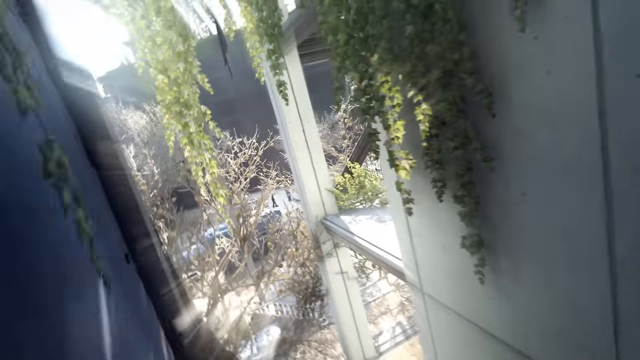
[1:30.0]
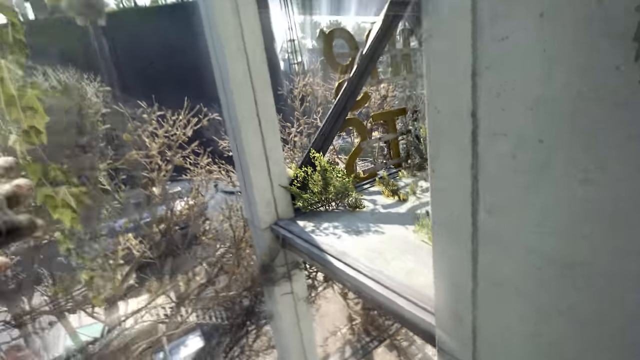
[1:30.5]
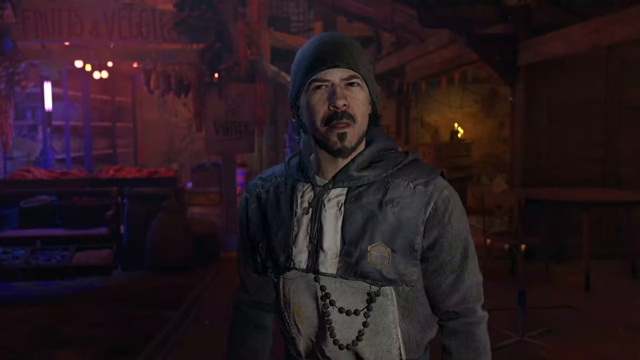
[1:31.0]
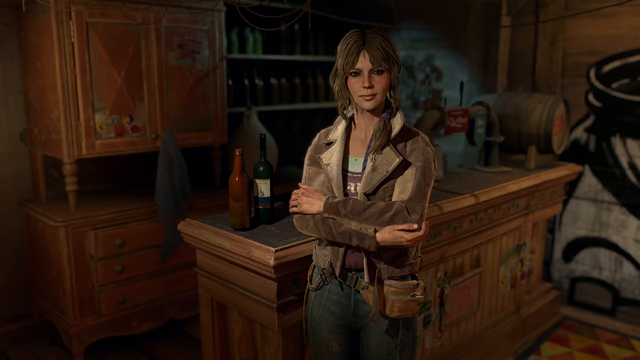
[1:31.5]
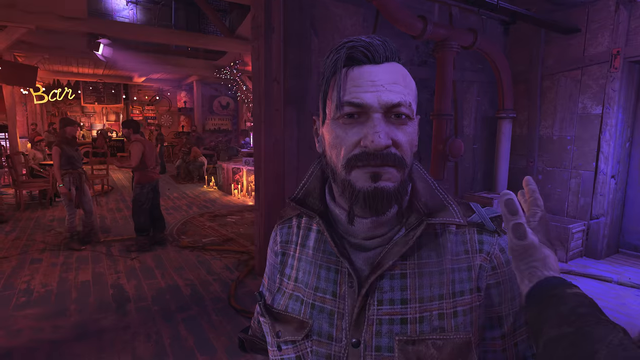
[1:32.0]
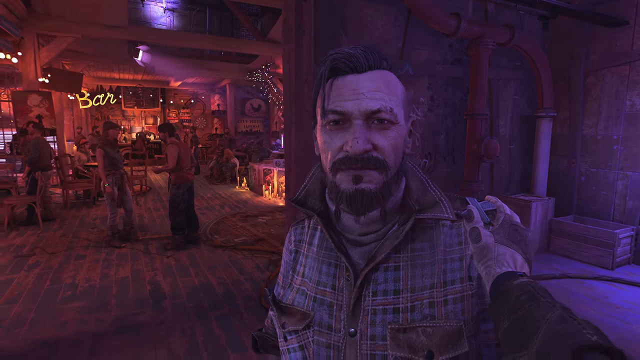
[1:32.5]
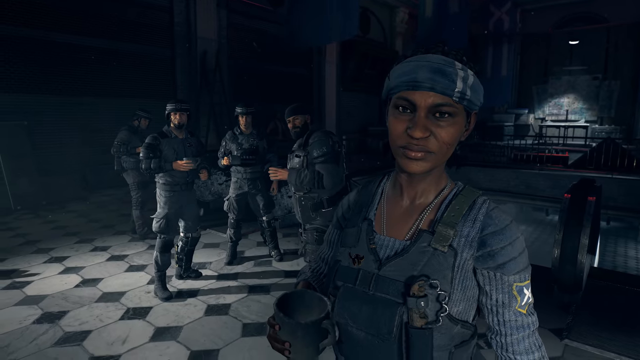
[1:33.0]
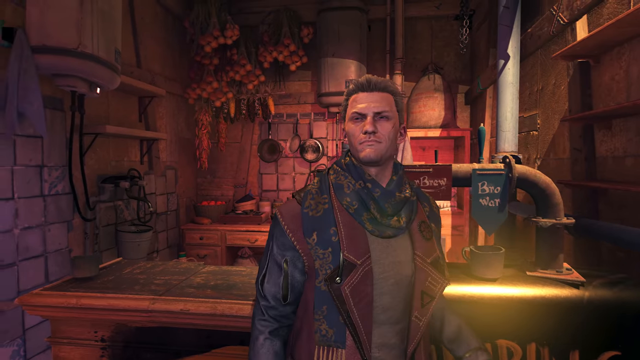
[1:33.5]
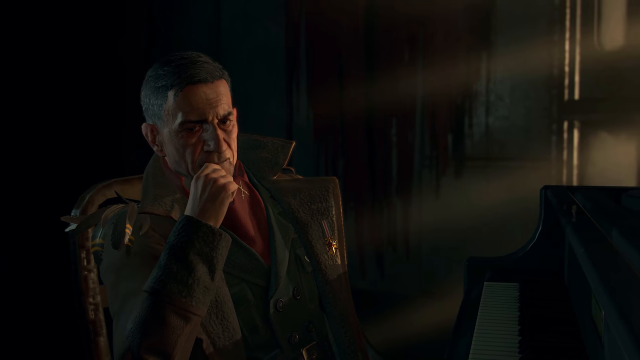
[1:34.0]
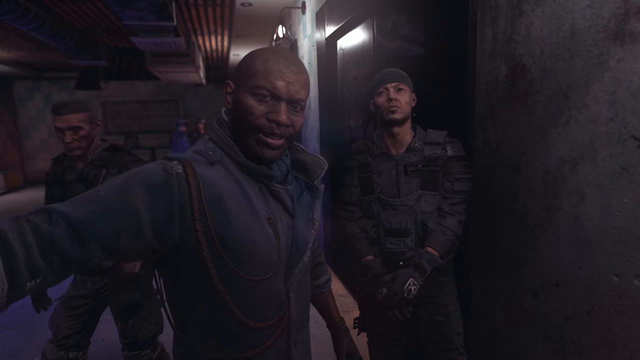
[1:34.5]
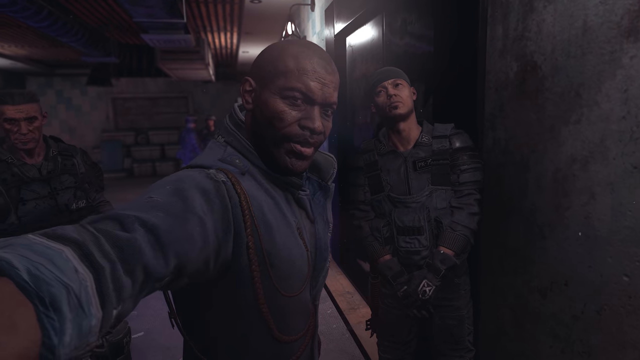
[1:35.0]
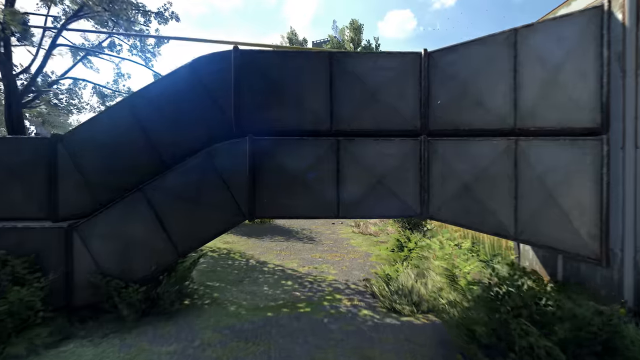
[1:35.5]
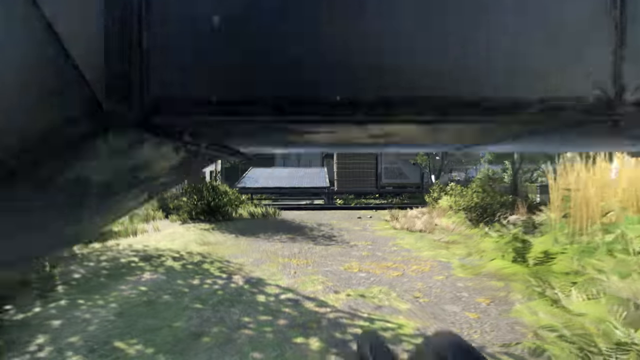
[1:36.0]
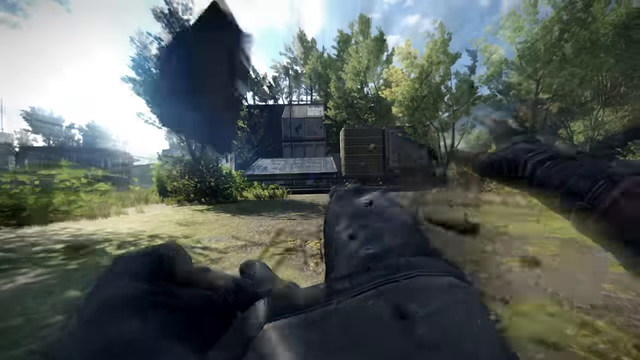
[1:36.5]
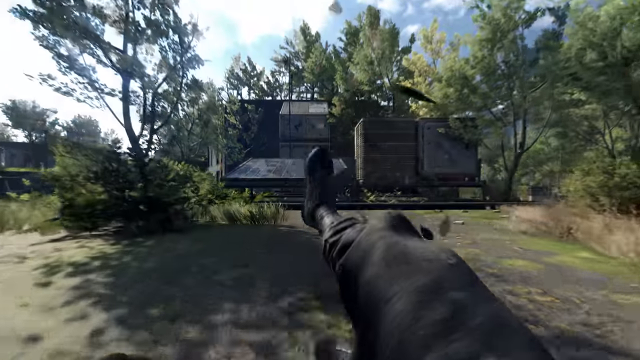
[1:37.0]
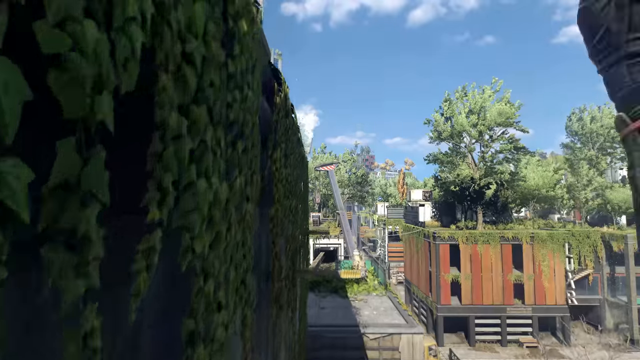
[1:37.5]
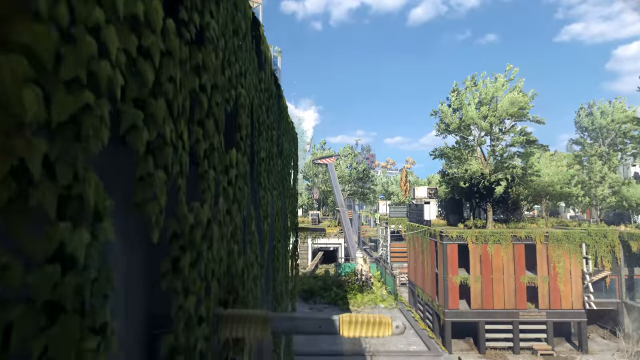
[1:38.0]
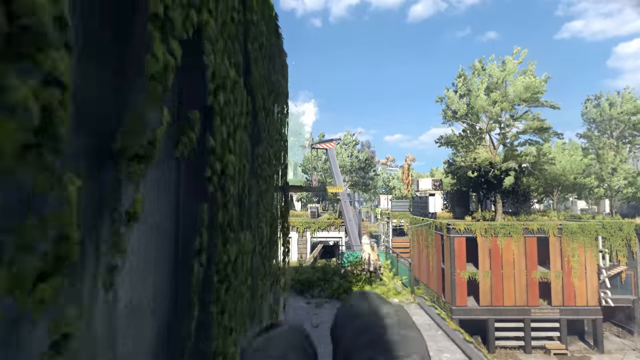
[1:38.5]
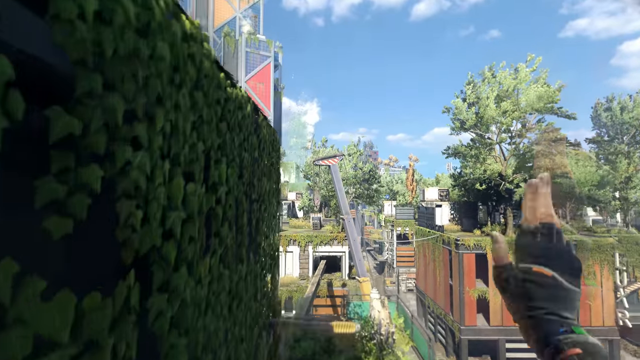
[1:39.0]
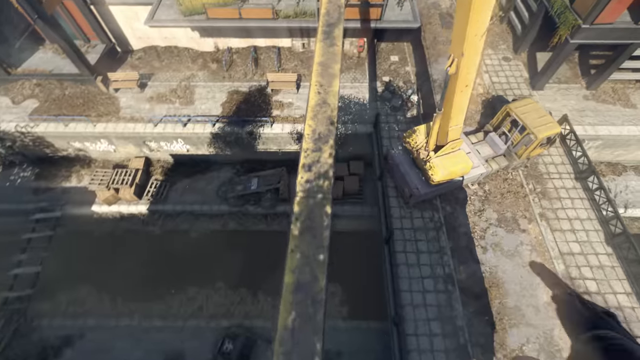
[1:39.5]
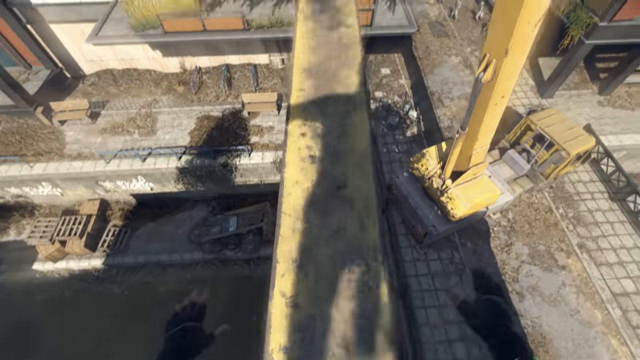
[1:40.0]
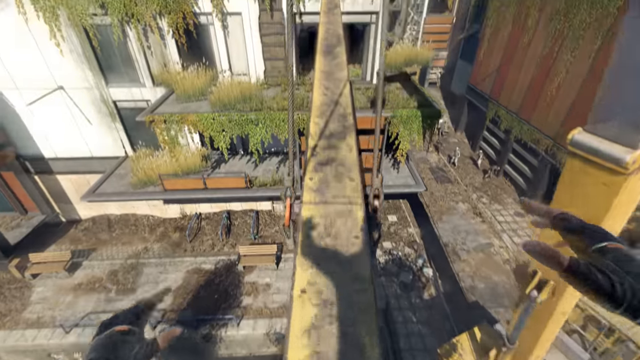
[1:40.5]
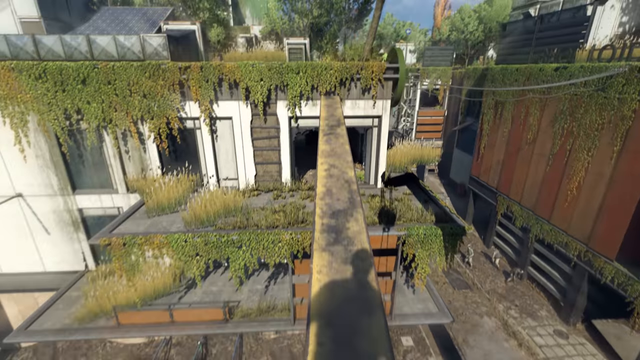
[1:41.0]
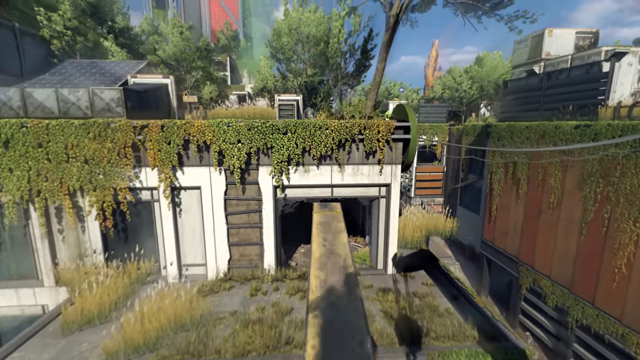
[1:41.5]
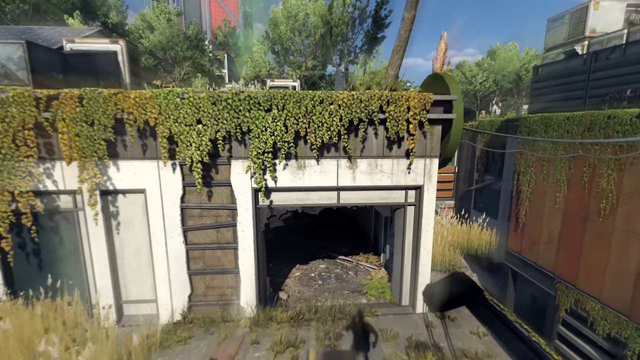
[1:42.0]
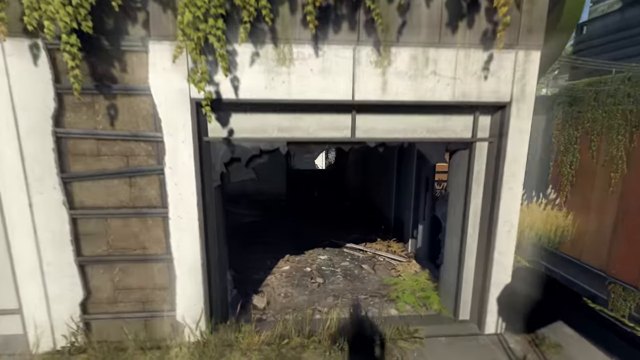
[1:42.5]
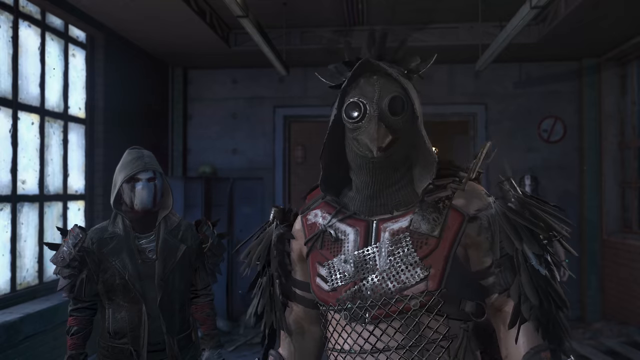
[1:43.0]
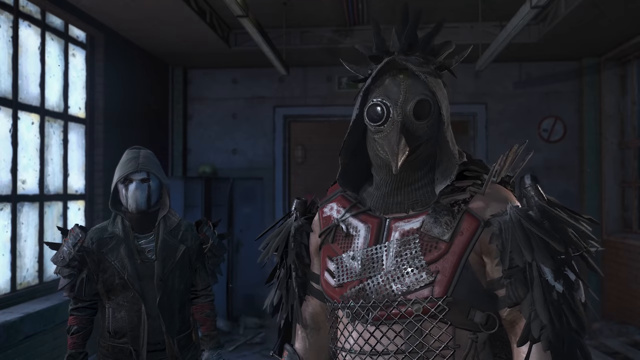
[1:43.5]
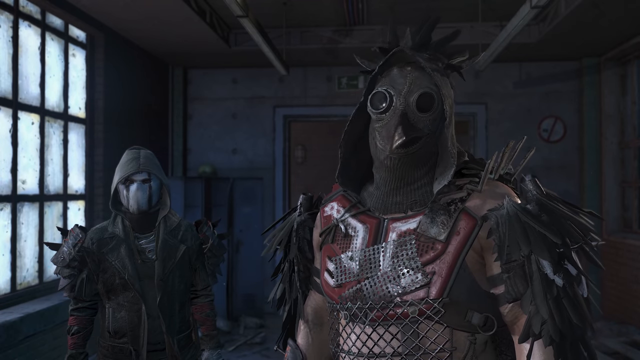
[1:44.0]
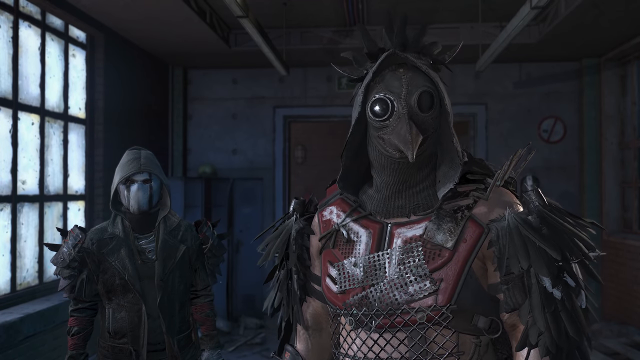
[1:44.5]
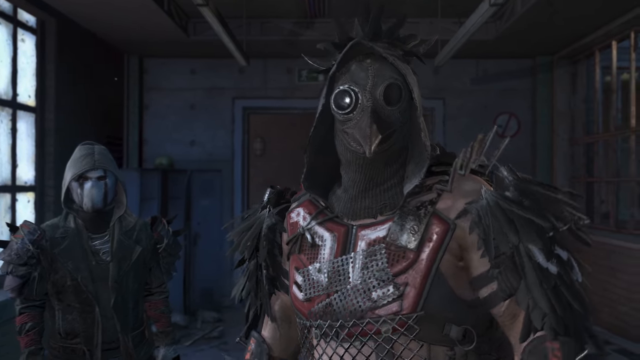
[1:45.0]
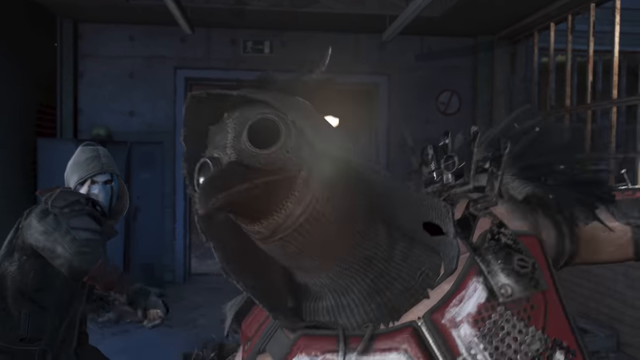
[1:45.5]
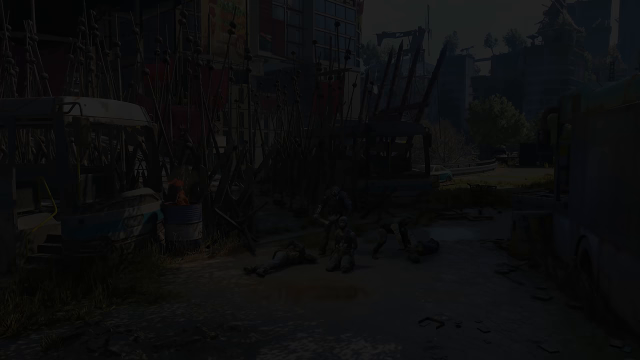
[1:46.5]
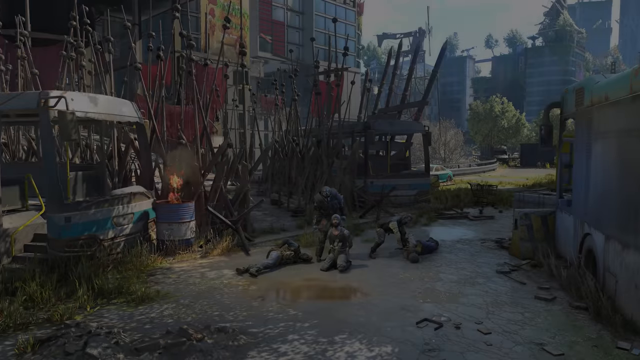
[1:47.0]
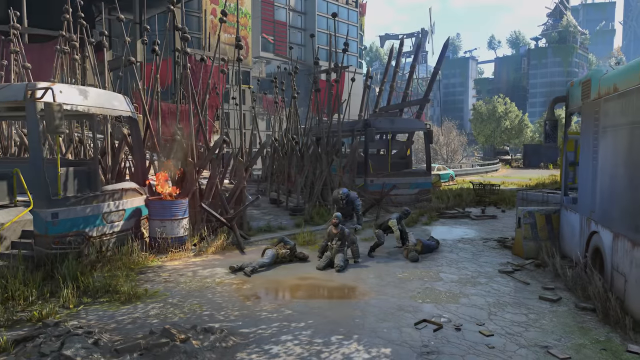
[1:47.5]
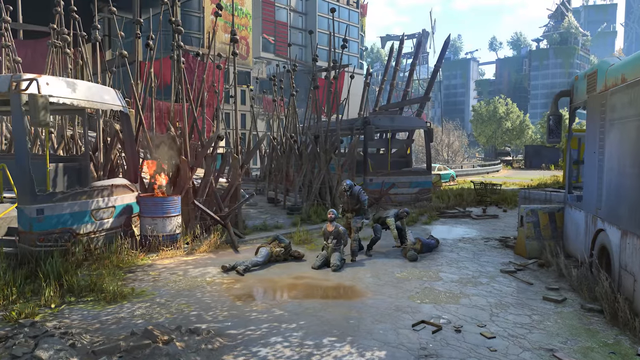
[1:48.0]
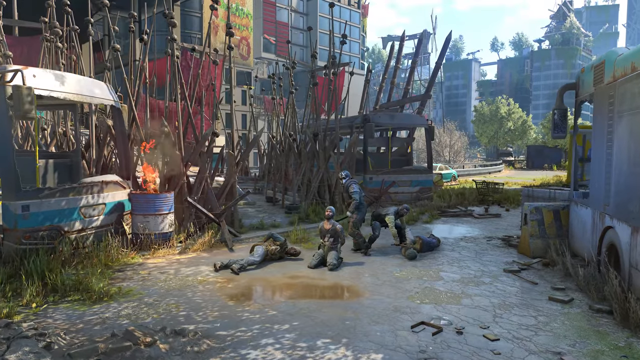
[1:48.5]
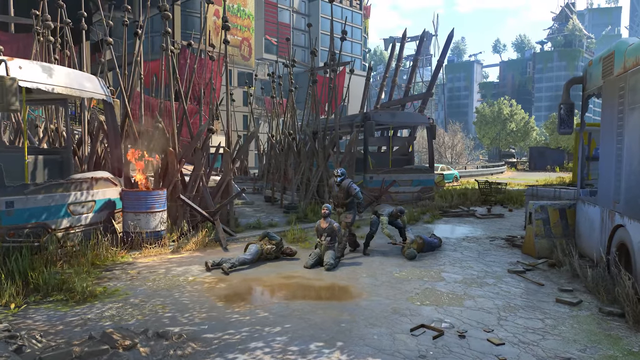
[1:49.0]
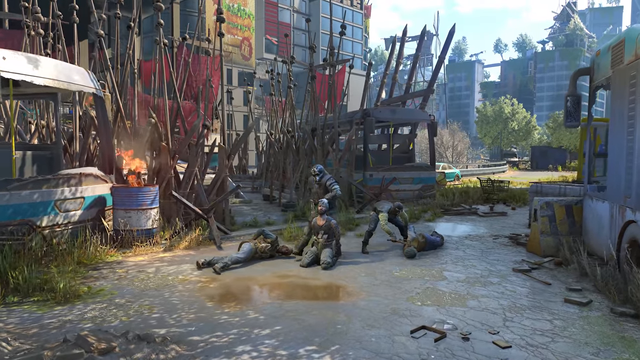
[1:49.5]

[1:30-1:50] The scene is outside among abandoned buildings with plants growing on the sides and windows missing, cracked or broken; the area looks distressed. Different people appear, some wearing different types of gear, and the zombies can be told apart from the non-zombies. A group of three people is shown: one with a hat, one who is black with a bald head, and one who looks white with short hair. They appear to shake hands. Then the person slides and jumps onto what looks like a distressed yellow crane. Someone with a beak mask and feather spikes hits him. People with their arms tied up are next to abandoned, burned-out buses.